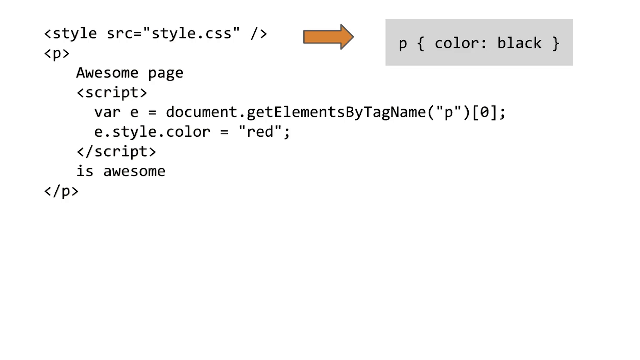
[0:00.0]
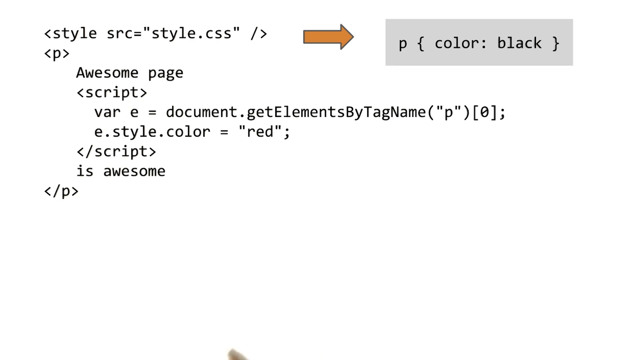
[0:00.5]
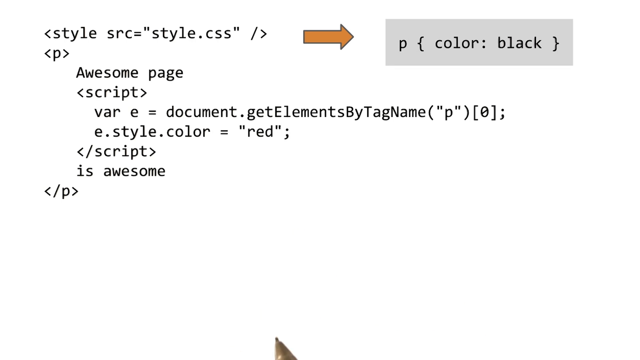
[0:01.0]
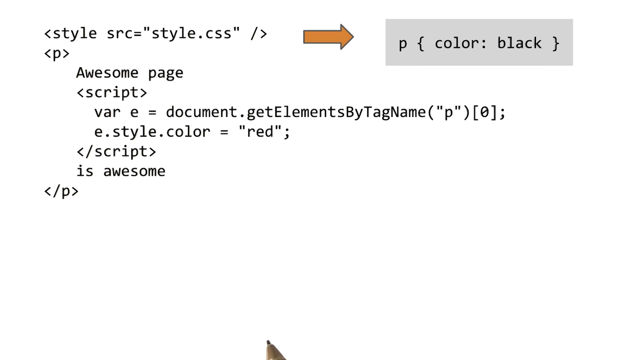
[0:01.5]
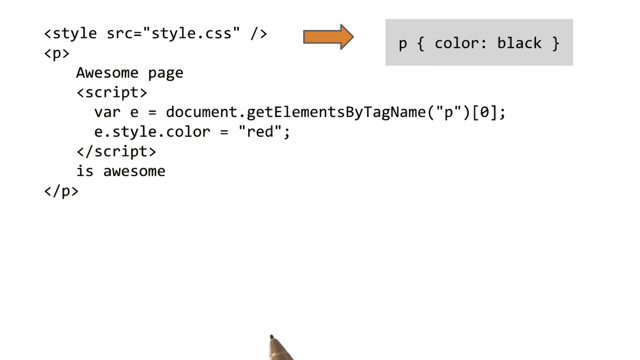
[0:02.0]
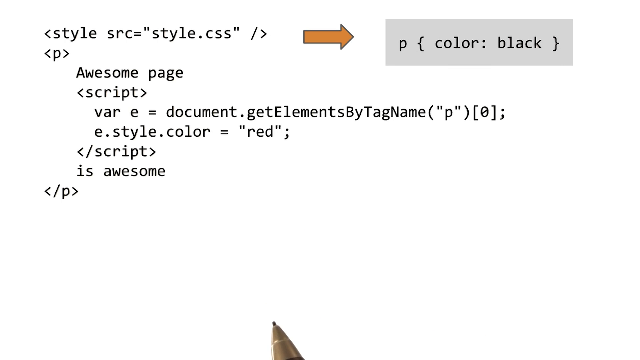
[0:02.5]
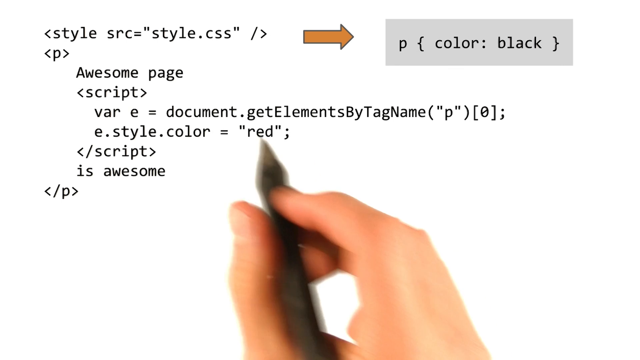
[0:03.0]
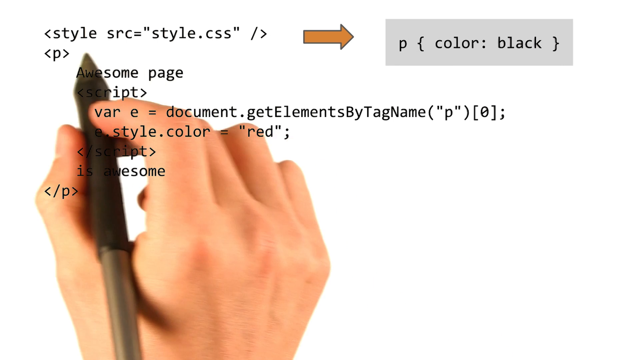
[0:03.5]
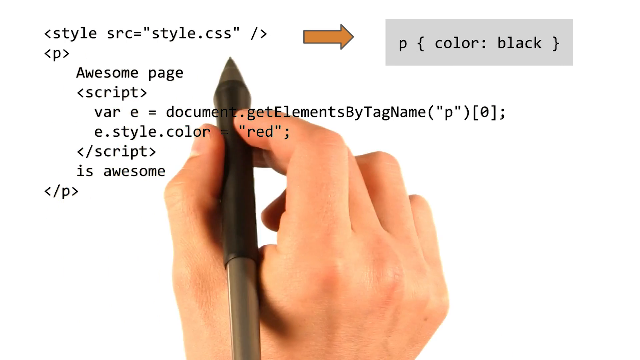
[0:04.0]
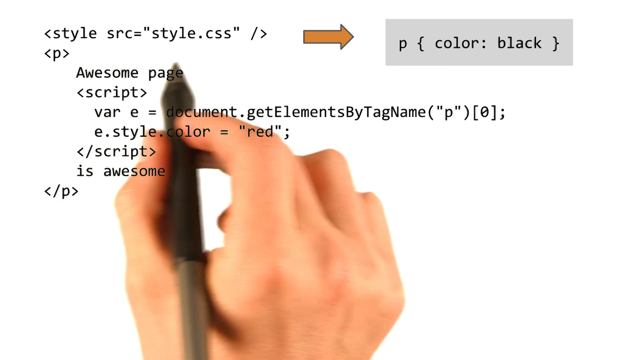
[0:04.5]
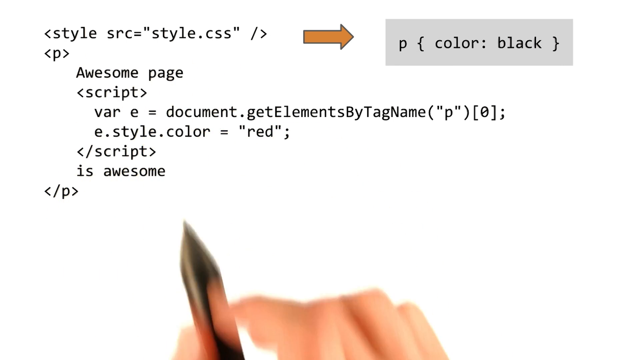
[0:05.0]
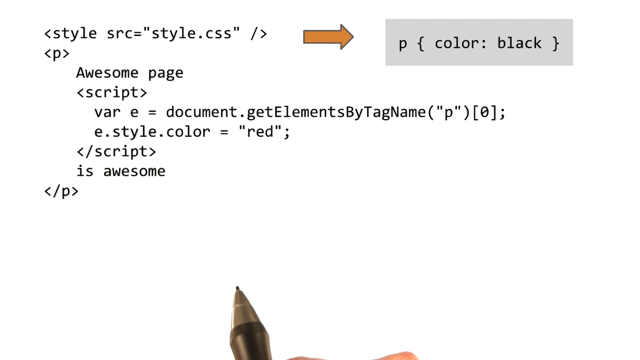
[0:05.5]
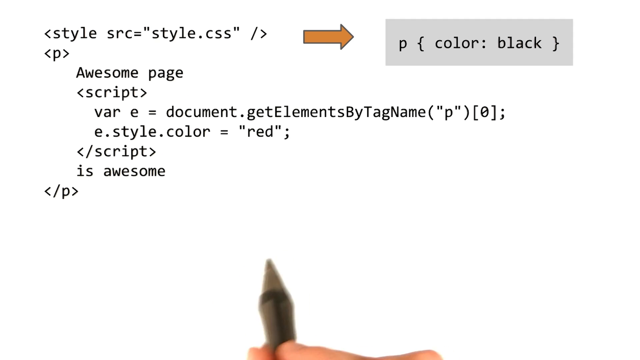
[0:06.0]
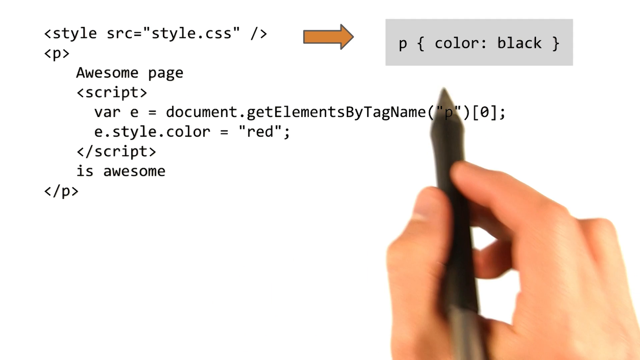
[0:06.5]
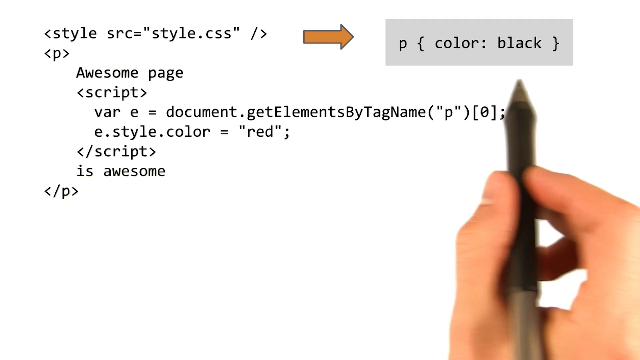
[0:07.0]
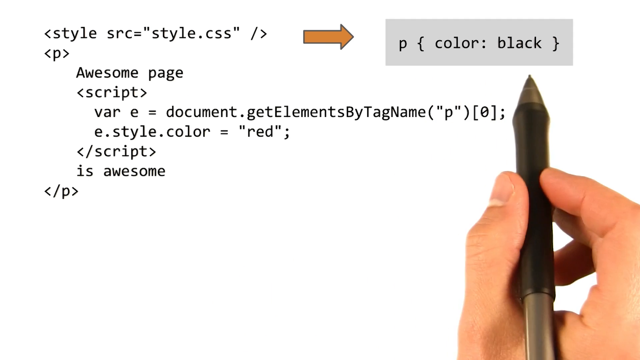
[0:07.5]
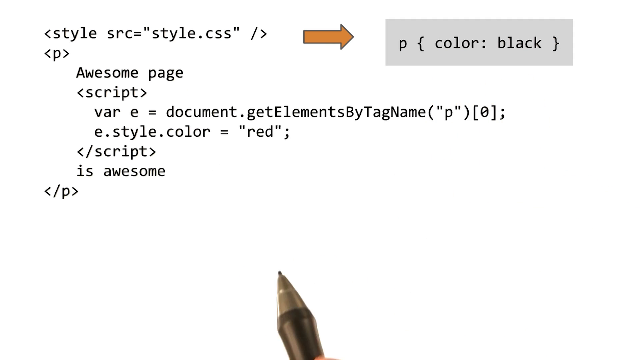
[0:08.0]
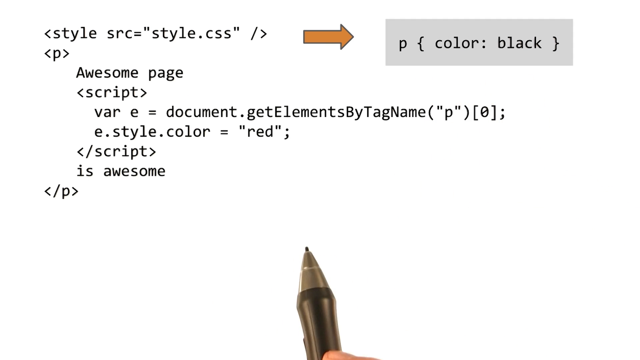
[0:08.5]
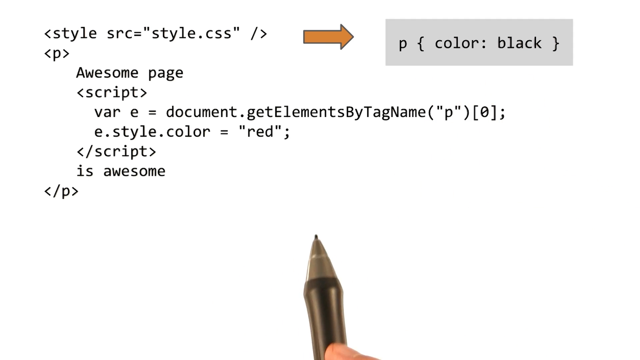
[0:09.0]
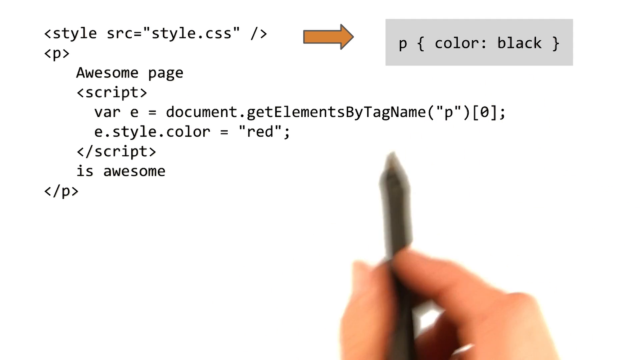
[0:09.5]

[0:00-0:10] Black letters on a white background read "<Style src="style.css" />", and a yellow arrow points at "p { color: black }". The hand of a white person holding a pen appears and gestures as if the first part is input and the second part is the result. It seems to be some sort of code made for demonstration, with a person acting as a teacher, or maybe a YouTube channel, apparently trying to help viewers learn it.